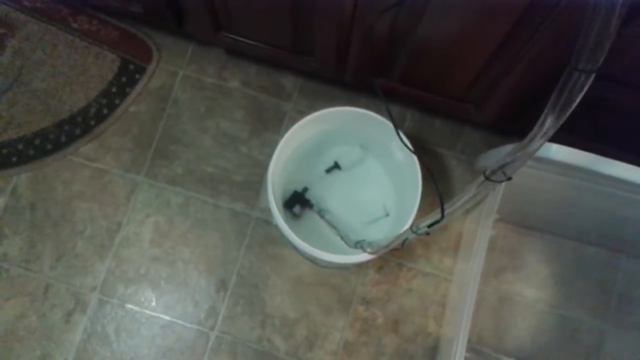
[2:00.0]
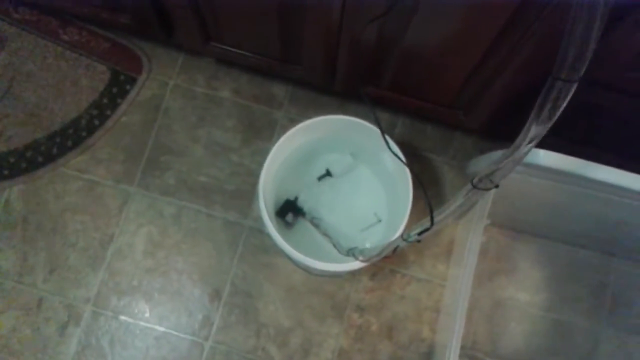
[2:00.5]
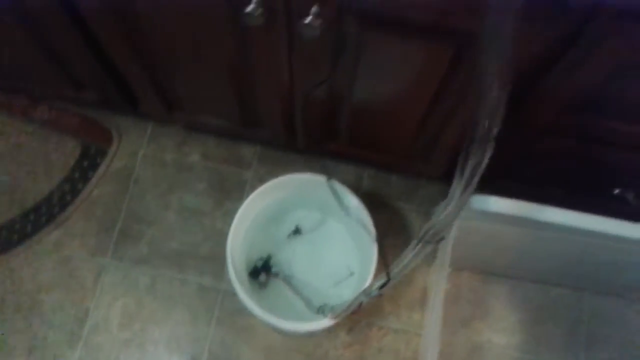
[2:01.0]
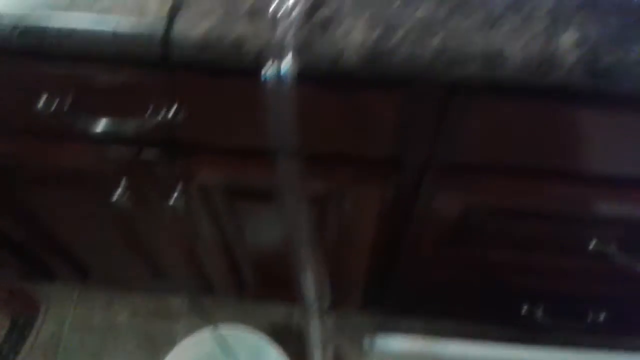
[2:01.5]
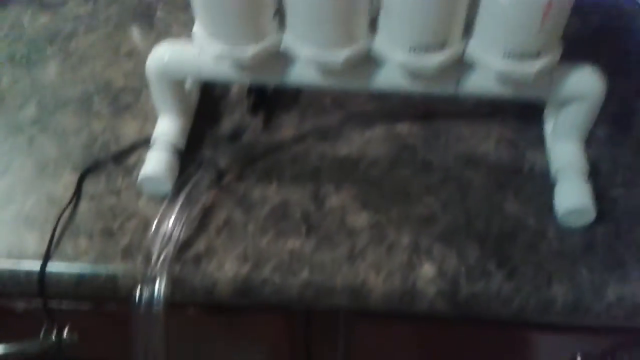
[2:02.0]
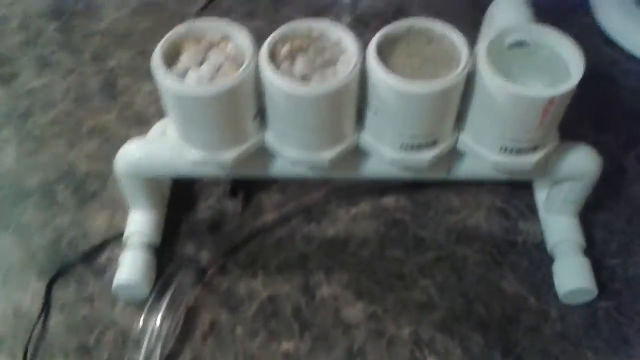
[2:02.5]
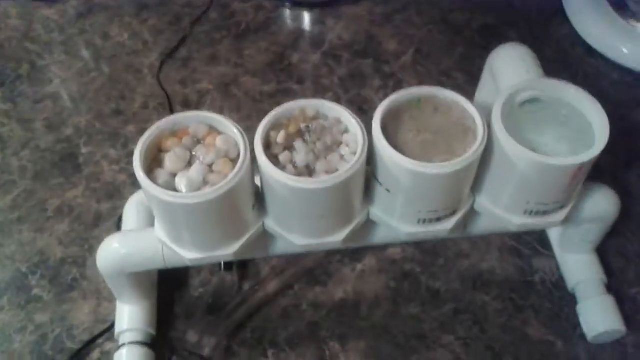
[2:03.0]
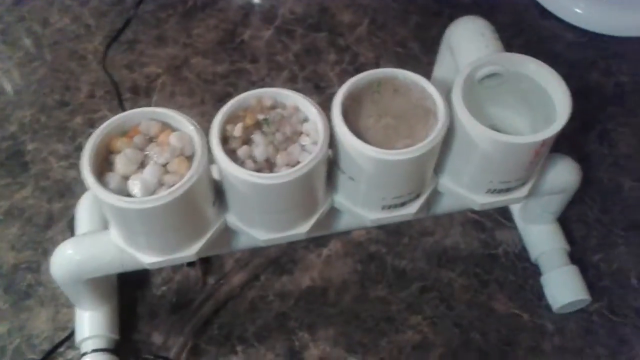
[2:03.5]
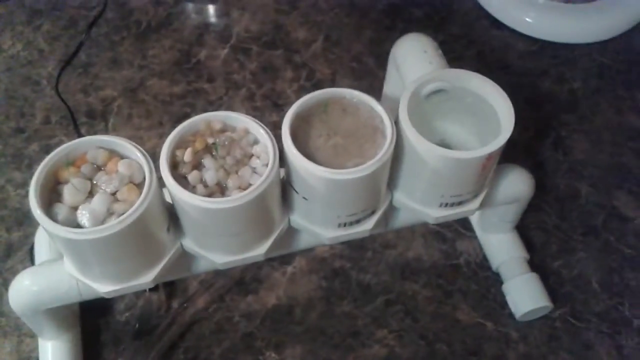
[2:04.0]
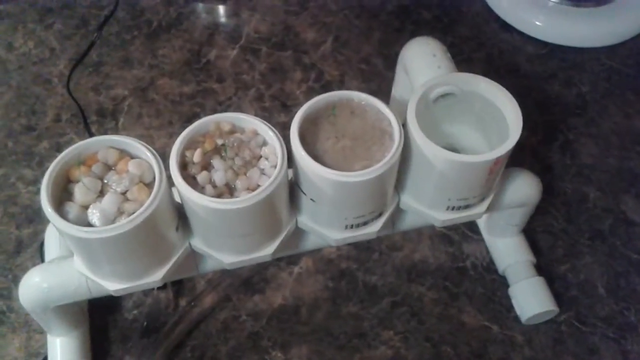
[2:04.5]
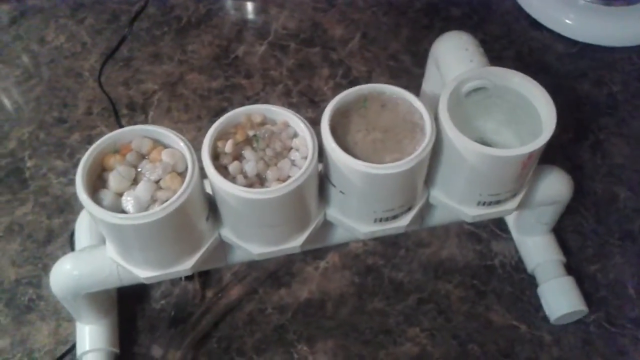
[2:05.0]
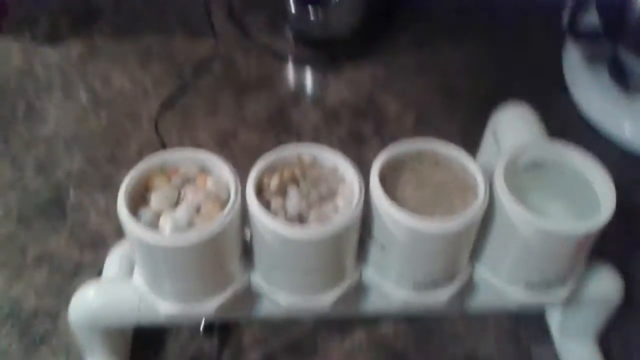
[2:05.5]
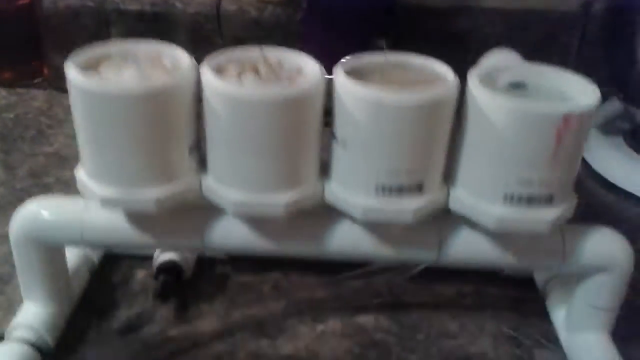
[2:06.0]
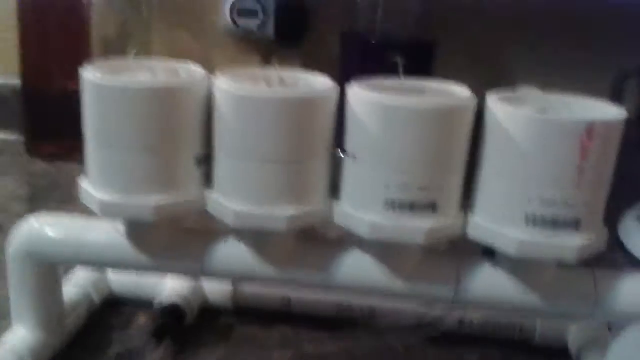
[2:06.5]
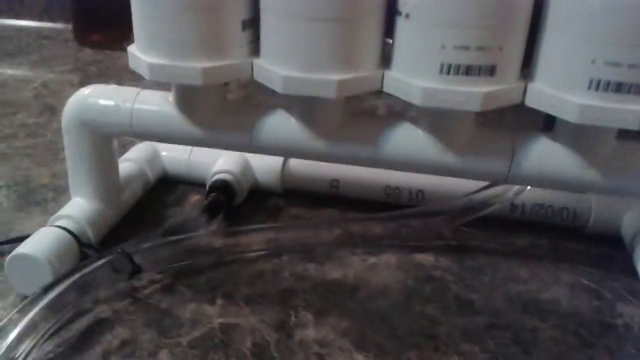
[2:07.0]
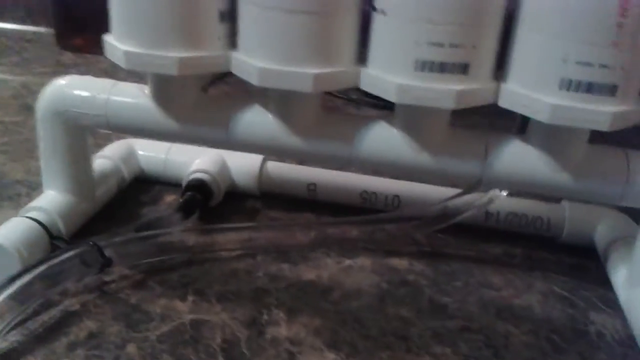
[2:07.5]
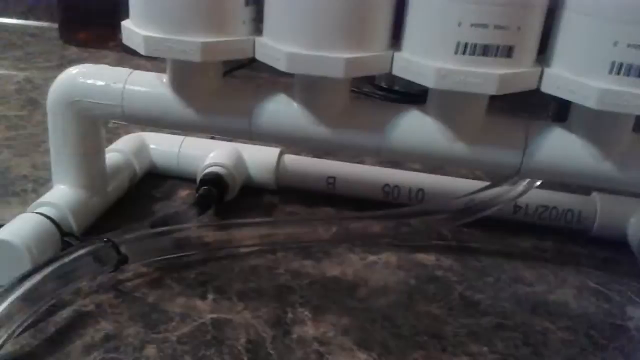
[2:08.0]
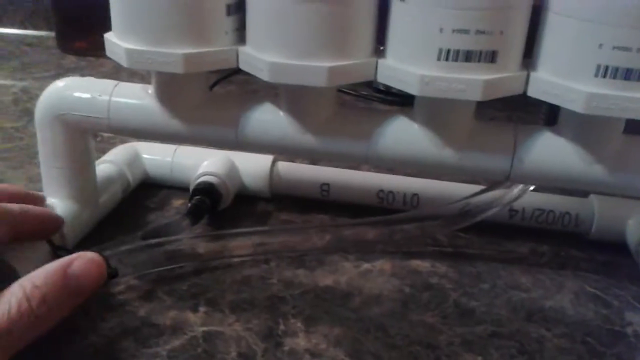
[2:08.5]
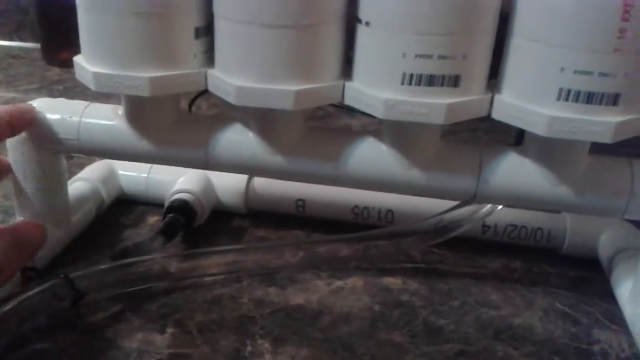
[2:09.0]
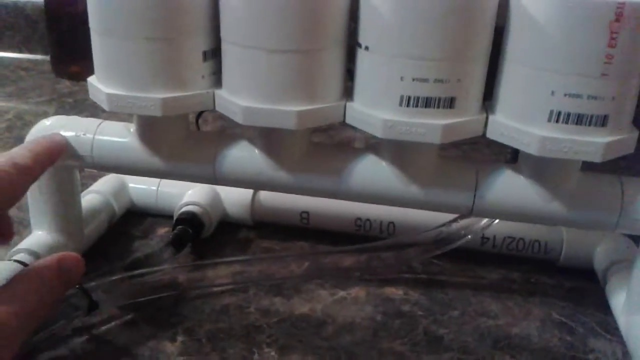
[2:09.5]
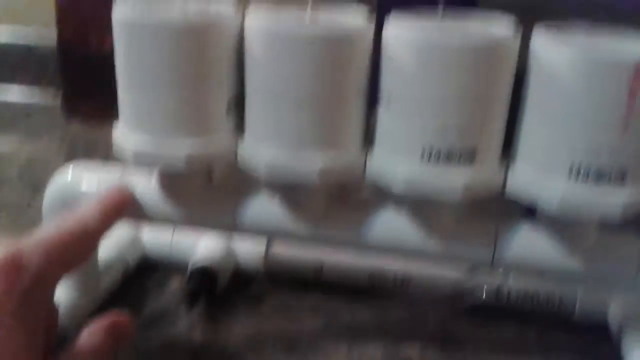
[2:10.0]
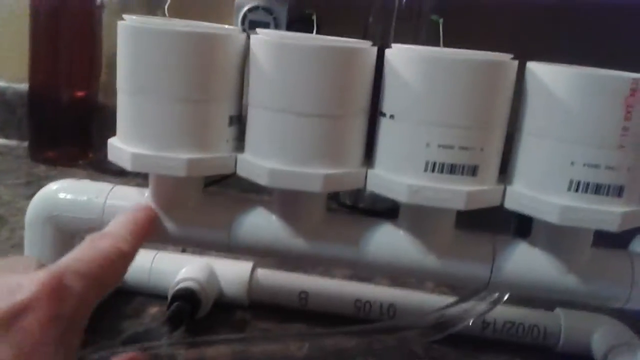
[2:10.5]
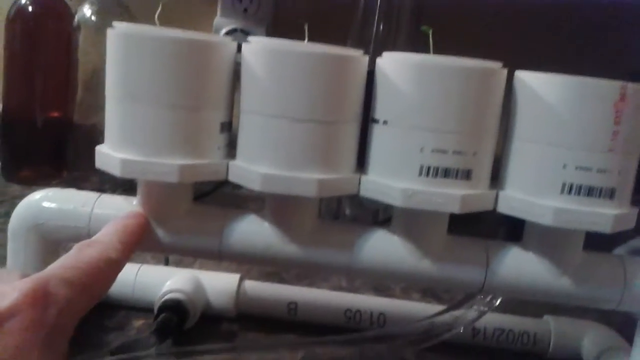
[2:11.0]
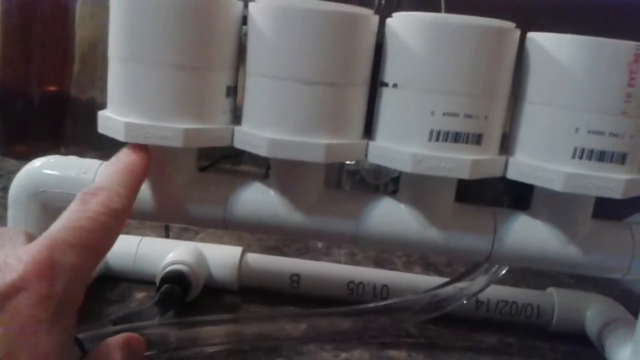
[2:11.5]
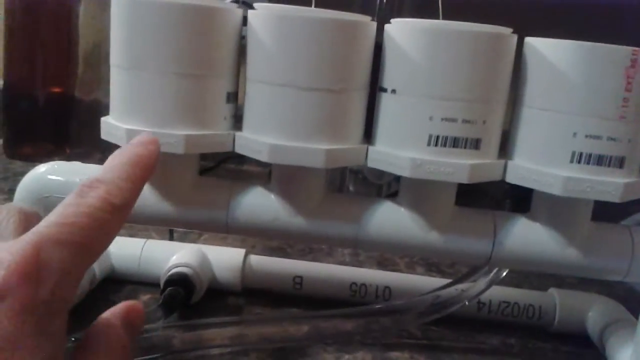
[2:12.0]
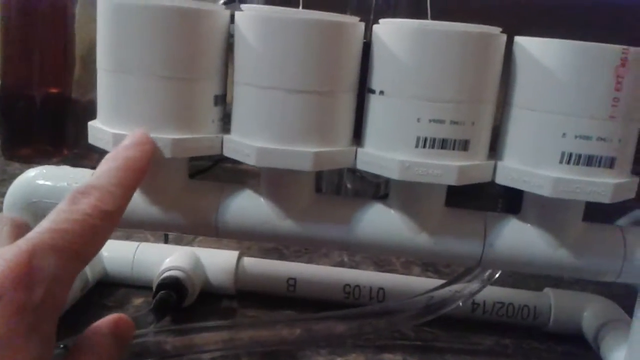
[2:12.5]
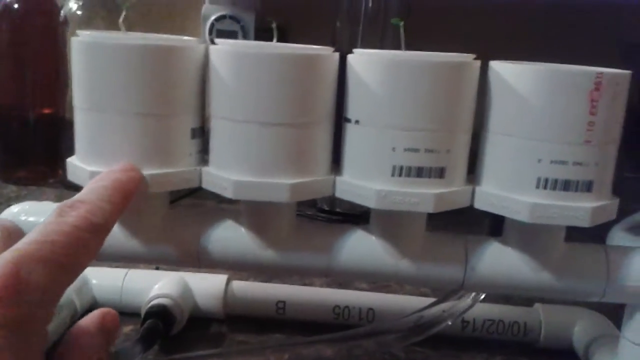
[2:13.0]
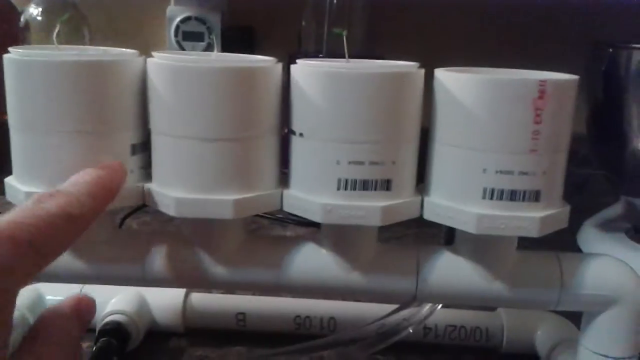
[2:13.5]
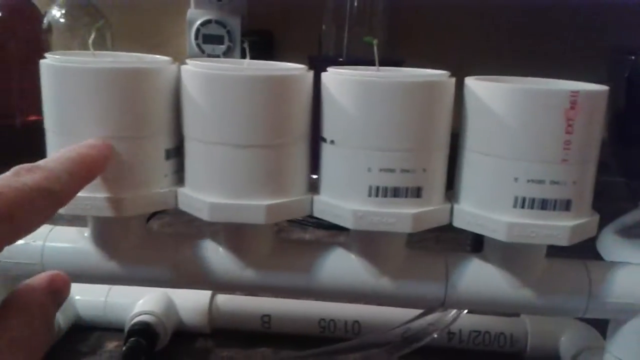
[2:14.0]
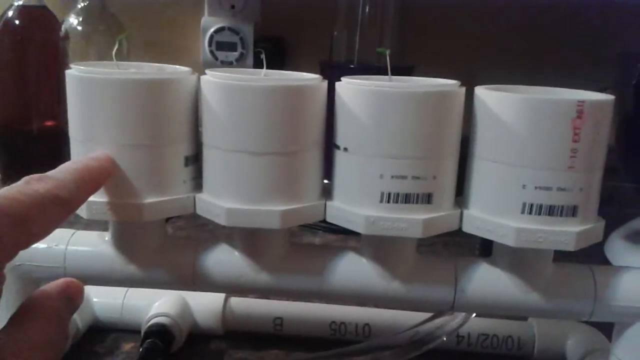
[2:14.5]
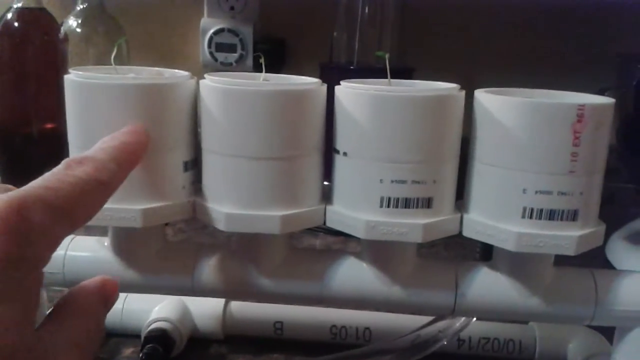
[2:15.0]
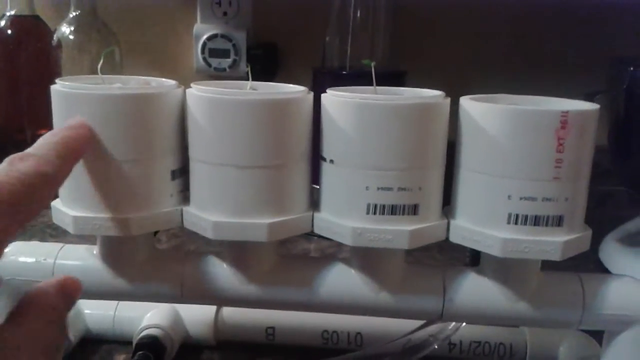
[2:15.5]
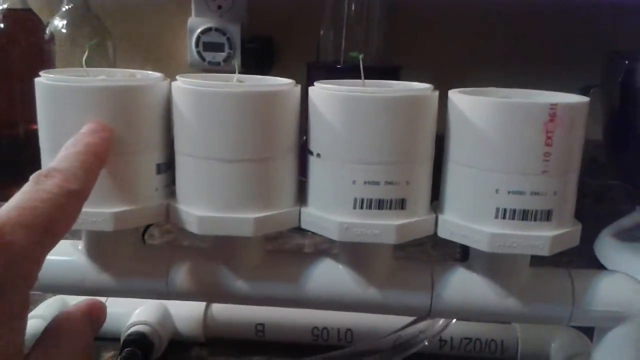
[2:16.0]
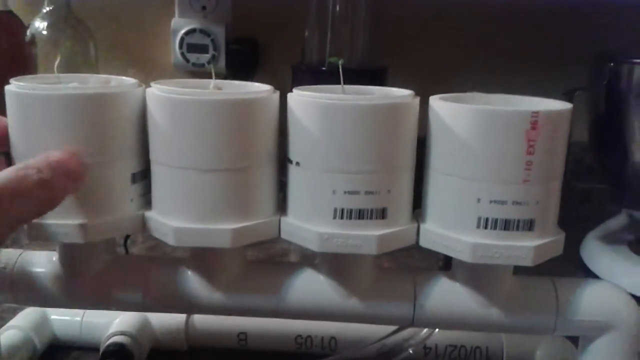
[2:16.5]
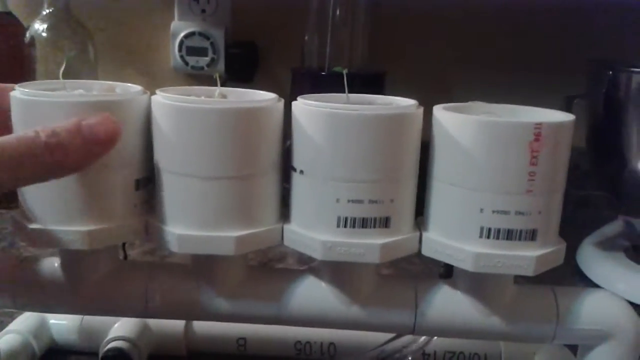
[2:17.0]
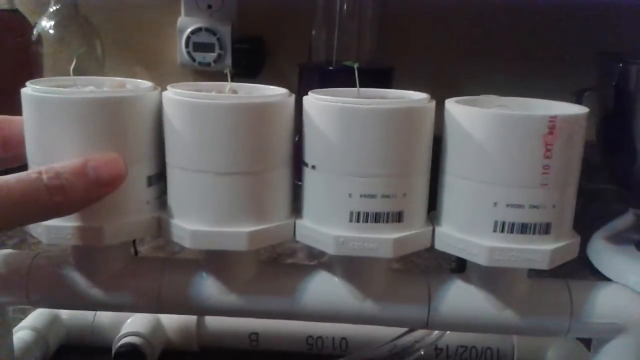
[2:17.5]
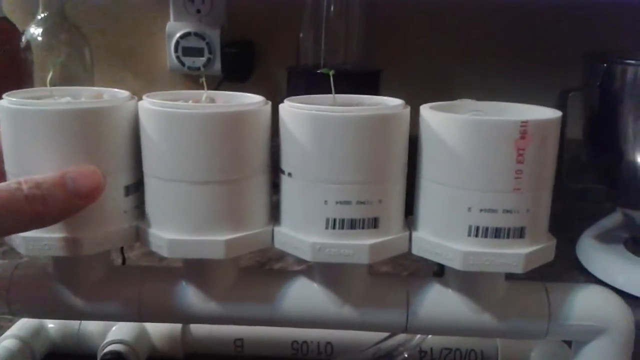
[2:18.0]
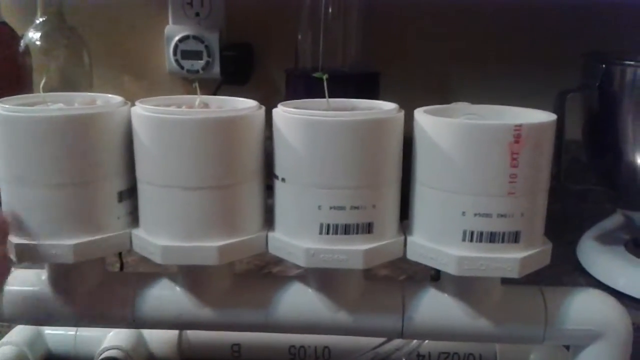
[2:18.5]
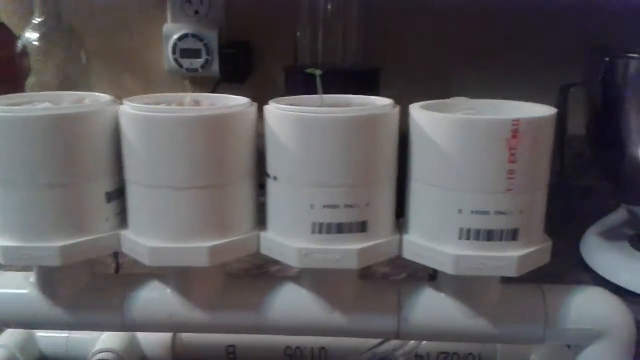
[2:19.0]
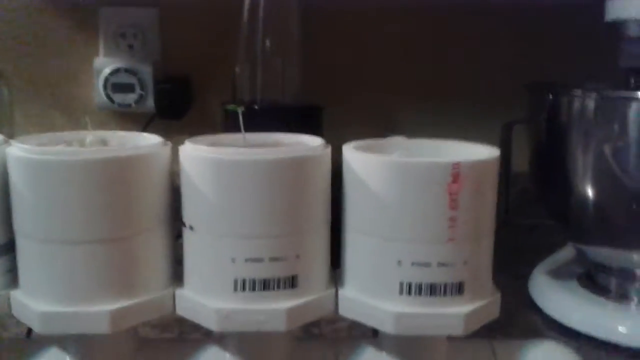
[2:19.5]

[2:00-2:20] The DIY how-to video, apparently about hydroponic gardening, shows the setup of cylinders with a small plant growing out of each, so tiny and thin it is almost invisible. Water seems to be draining, apparently as he uses a pump, from the three filled cylinders into the fourth one and into the bucket. He points to the cylinder on the left. One cylinder looks like it holds sand. The bucket on the floor is shown again, and it looks like it is attached to a pump on the bottom. To the right of it is something that almost looks like a small lint roller or a paint roller.